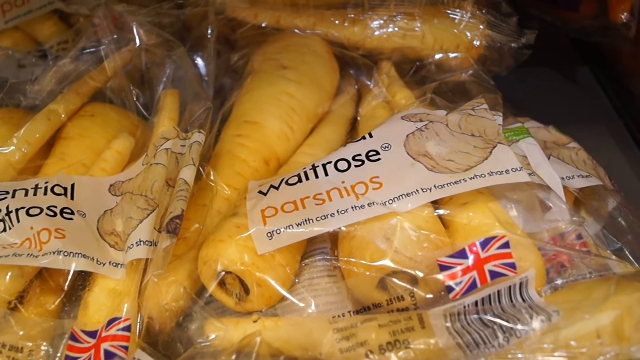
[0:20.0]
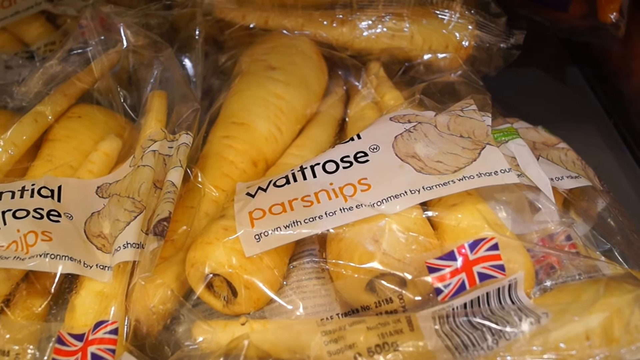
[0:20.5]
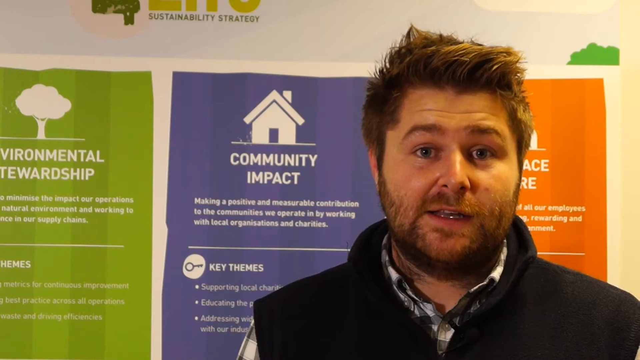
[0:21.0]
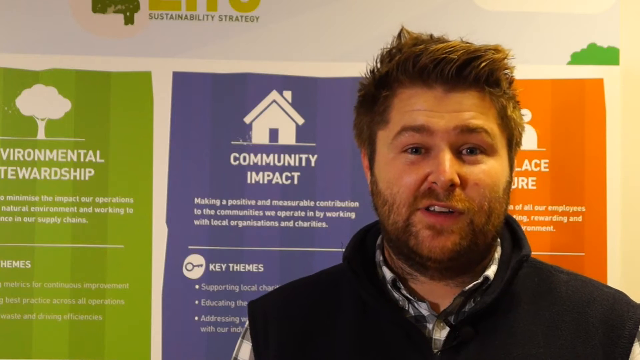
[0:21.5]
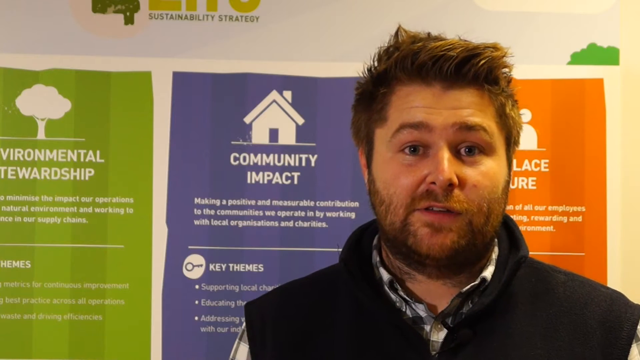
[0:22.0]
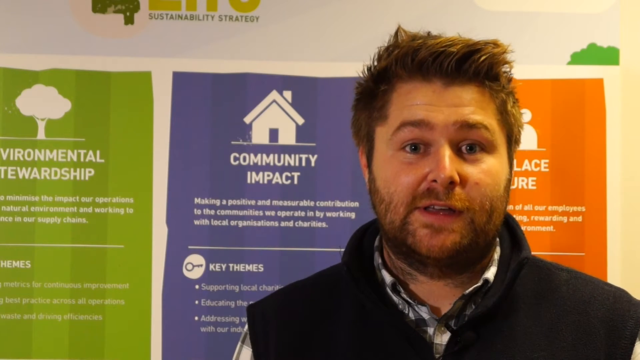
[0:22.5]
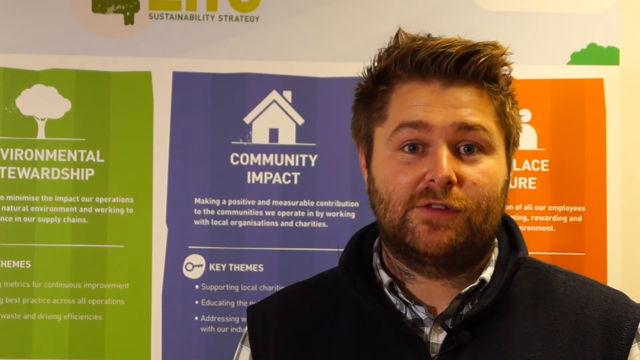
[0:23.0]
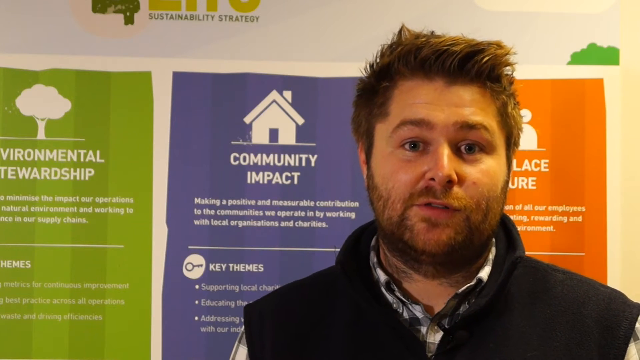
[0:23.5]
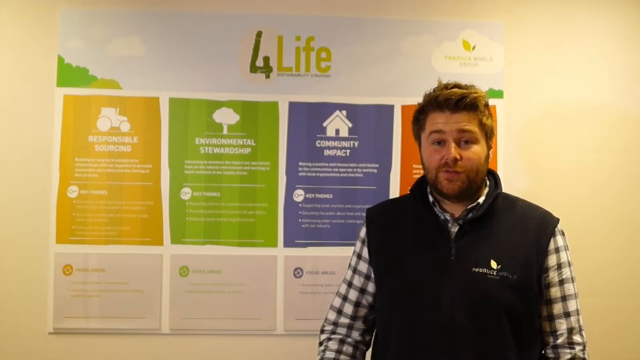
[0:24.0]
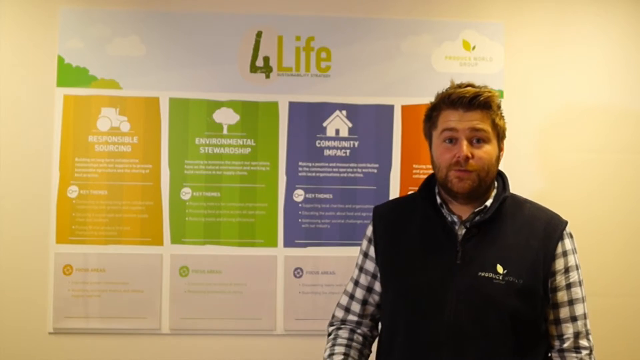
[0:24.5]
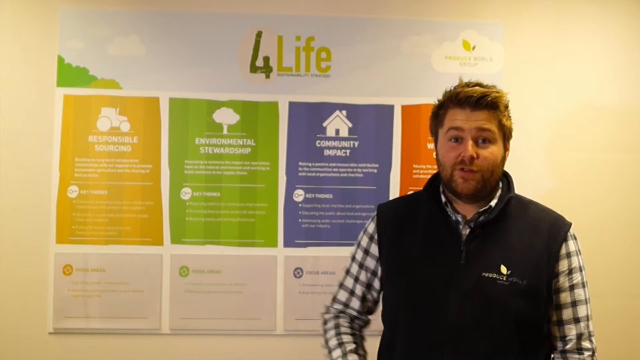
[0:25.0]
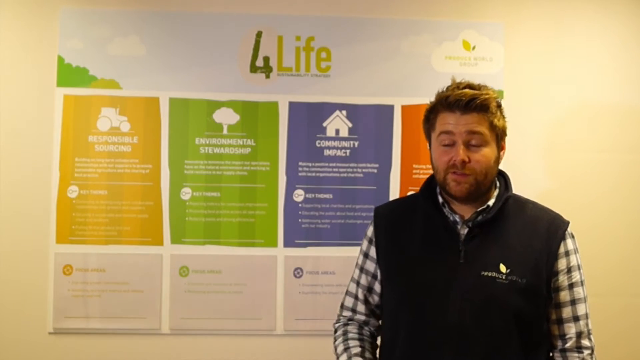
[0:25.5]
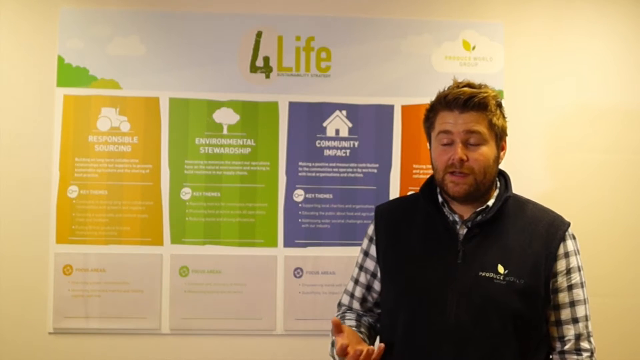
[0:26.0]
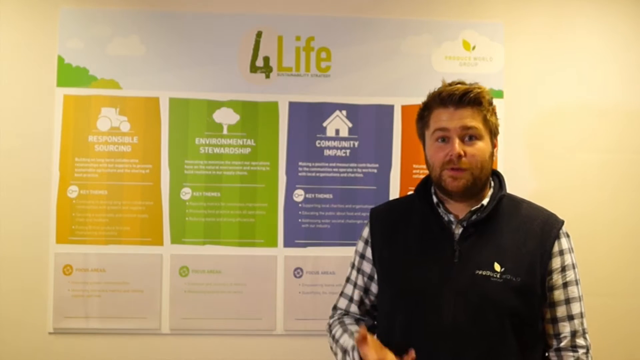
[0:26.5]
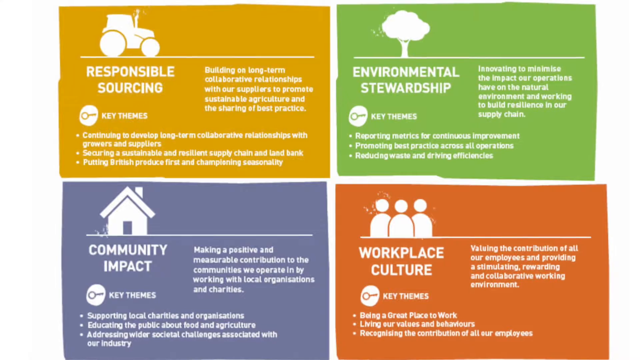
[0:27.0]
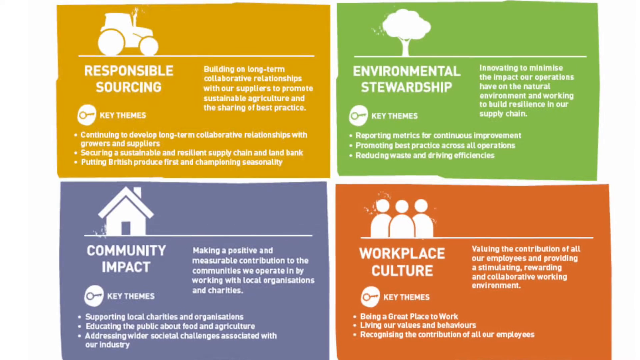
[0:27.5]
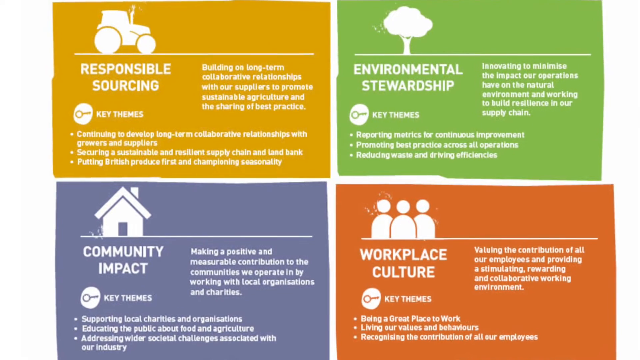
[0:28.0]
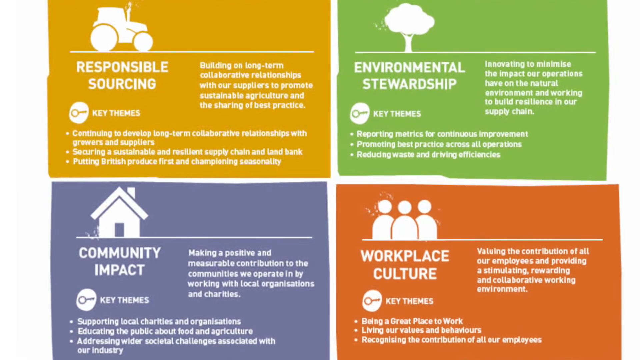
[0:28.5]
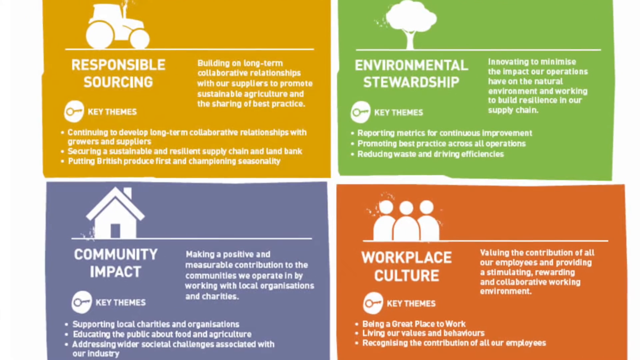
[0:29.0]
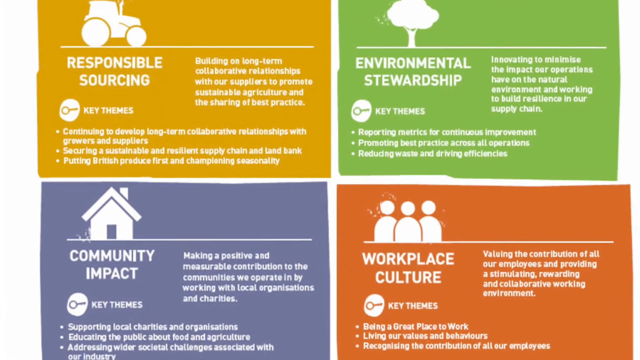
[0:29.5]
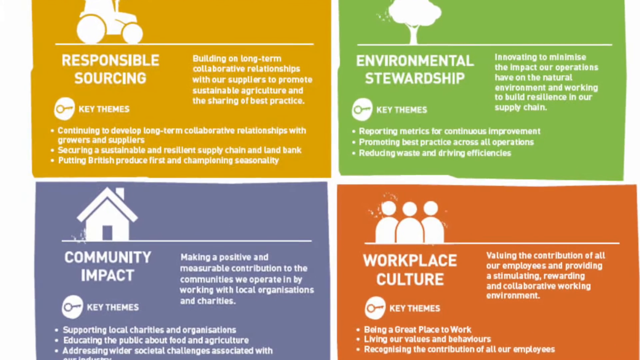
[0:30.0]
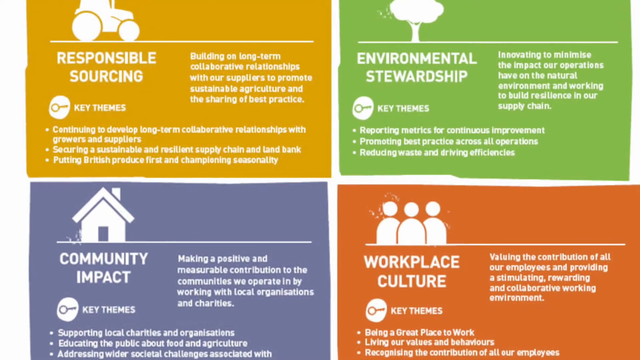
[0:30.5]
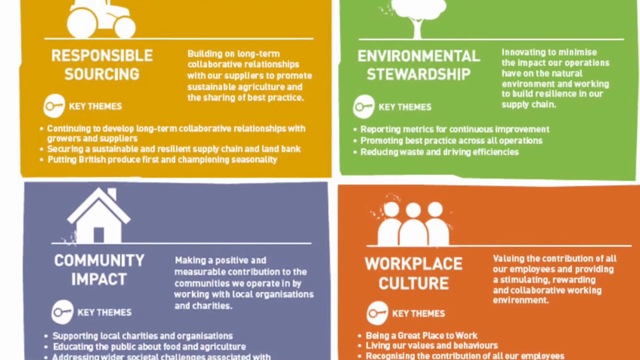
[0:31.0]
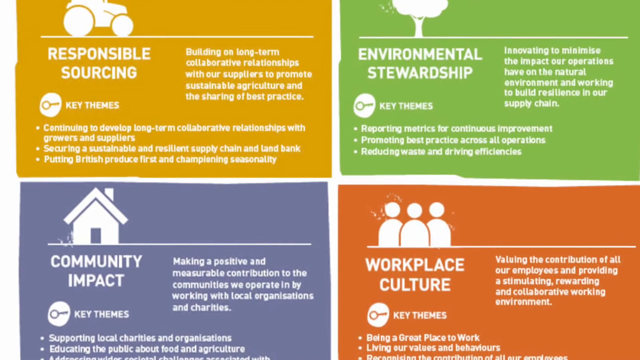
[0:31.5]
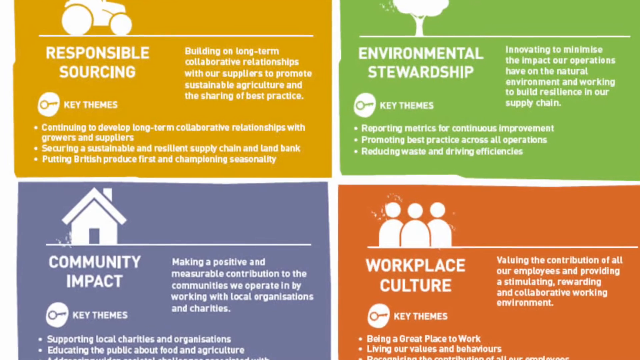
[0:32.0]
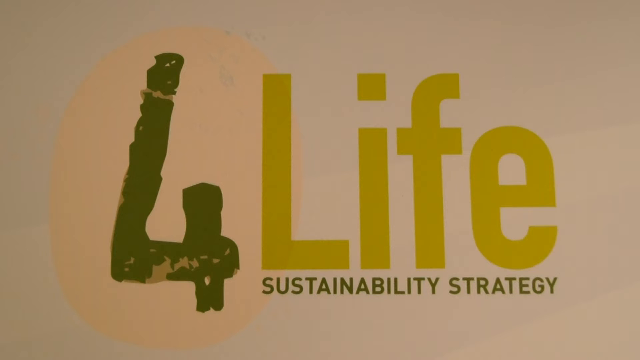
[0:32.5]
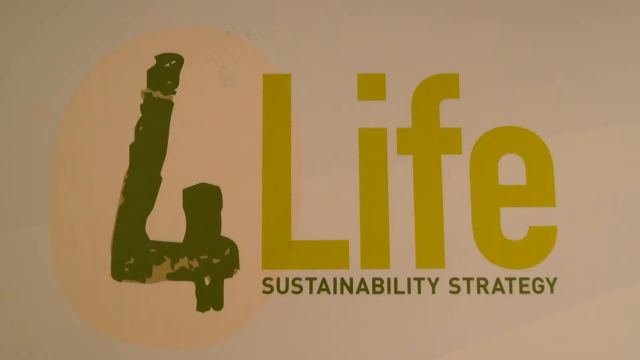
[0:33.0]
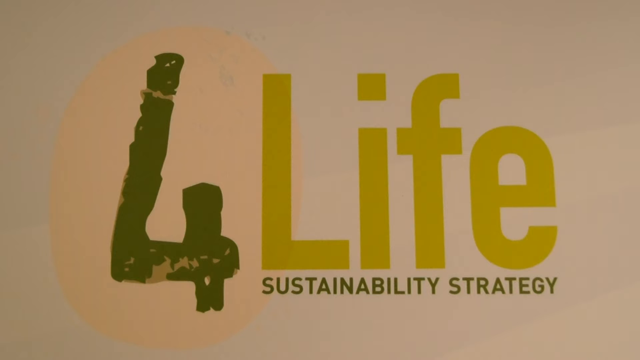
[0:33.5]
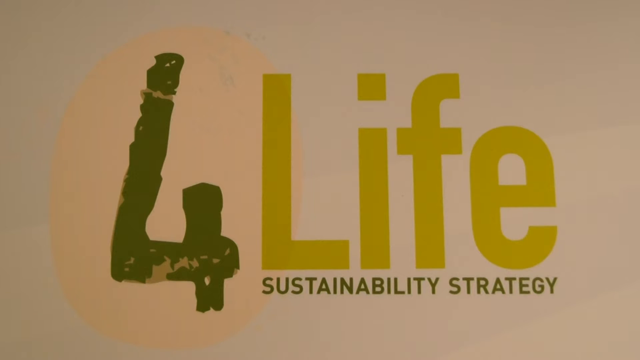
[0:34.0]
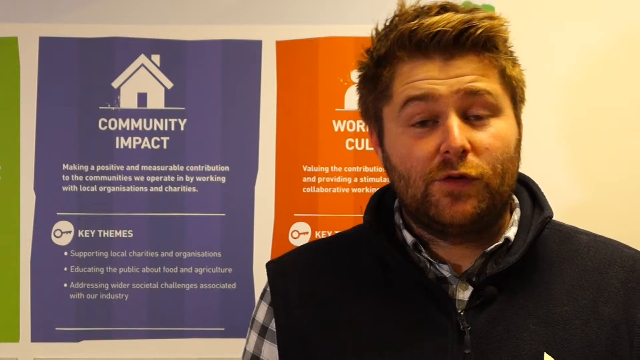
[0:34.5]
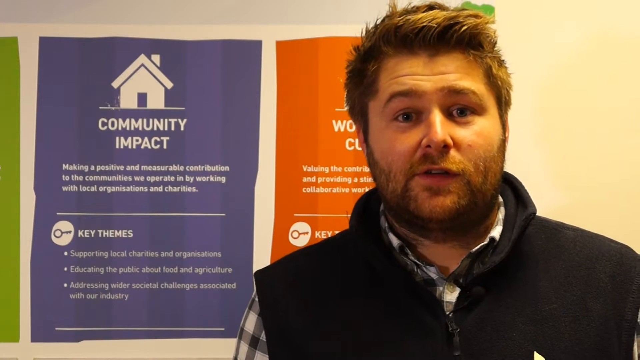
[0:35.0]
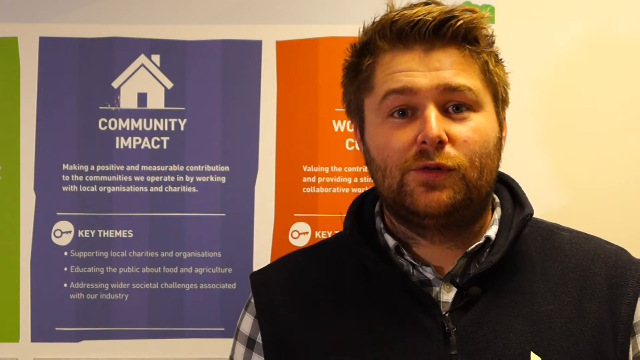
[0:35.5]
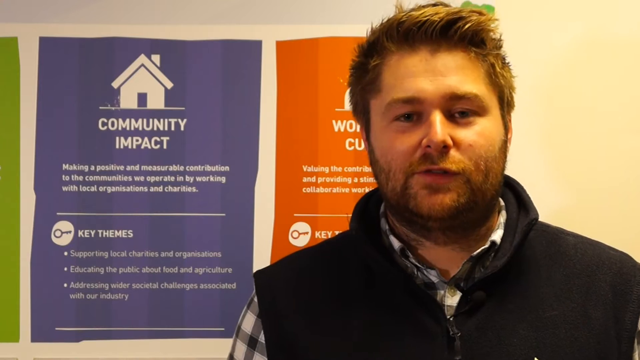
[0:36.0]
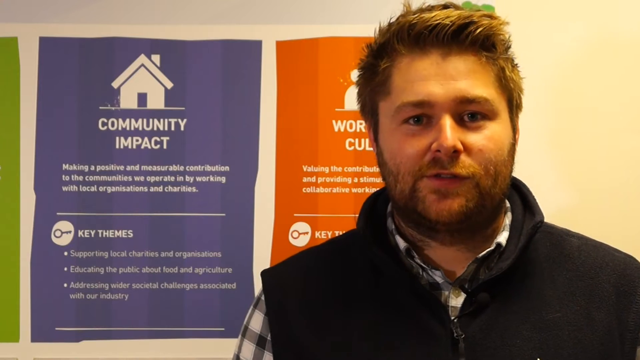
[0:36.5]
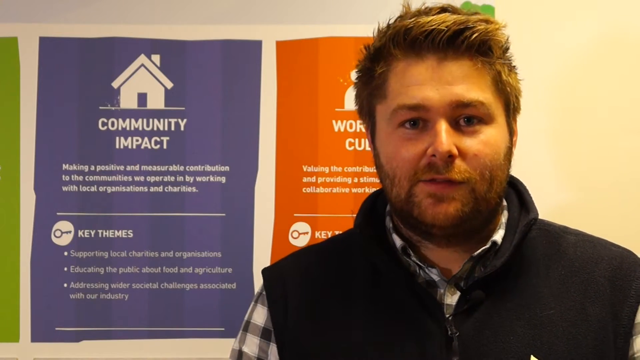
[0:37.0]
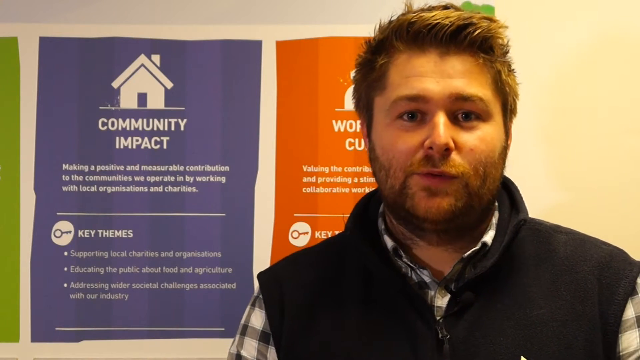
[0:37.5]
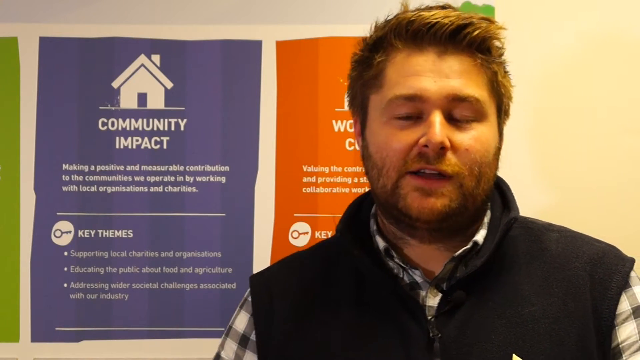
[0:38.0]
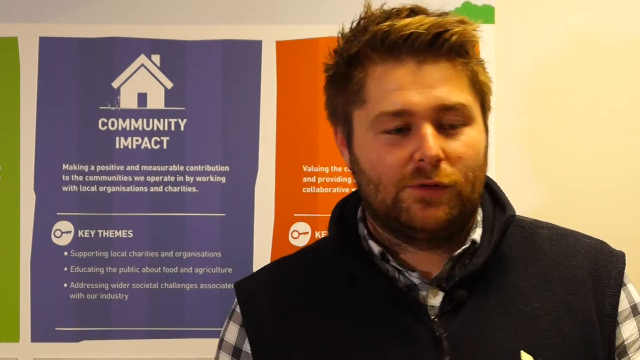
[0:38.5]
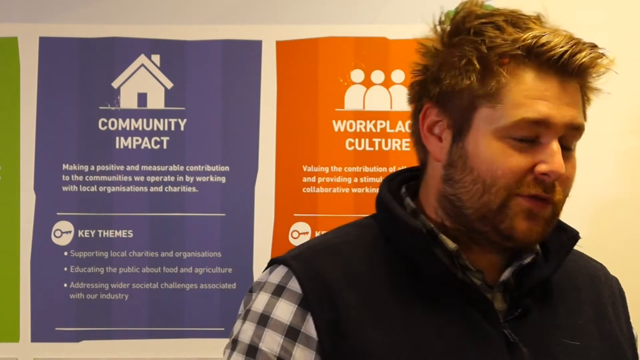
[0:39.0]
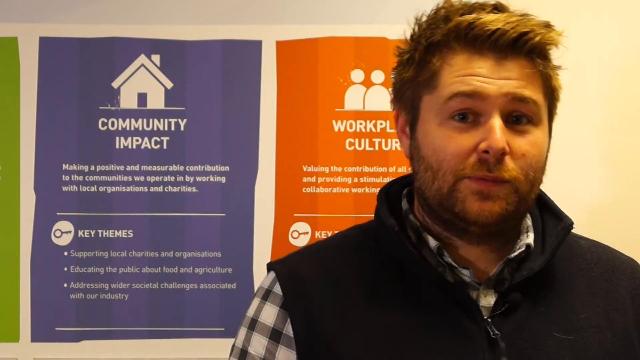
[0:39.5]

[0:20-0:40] Waitrose parsnips are shown, and then the view pans back to Guy Thallon, who continues speaking to the camera. The shot pans out to reveal the whole banner behind him, which reads "4 life." "Responsible sourcing" is in a yellowish-green box with a tractor, "environmental stewardship" is in a green rectangle with a tree, and "community impact" is in a blue triangle with a house. An orange rectangle cannot be seen. There is writing at the bottom, and there are more boxes. The camera zooms in to the boxes, showing responsible sourcing with the tractor, environmental stewardship with the little tree, community impact with the little house, and the orange rectangle, "workplace culture," which could not be seen before. The next screen is a graphic of the "4 life sustainability strategy," and then the video returns to Guy Thallon talking to the camera.